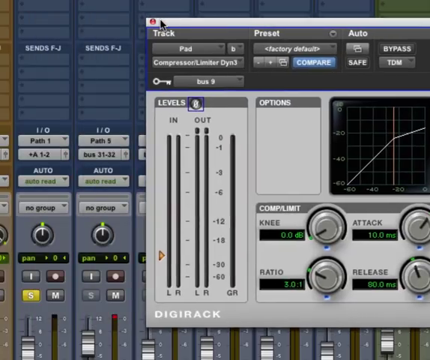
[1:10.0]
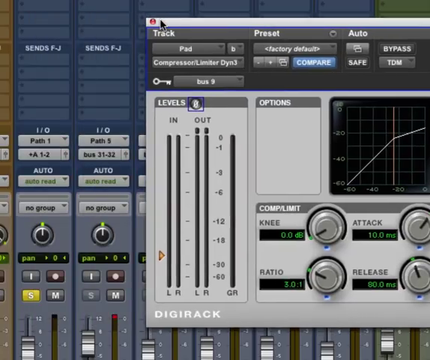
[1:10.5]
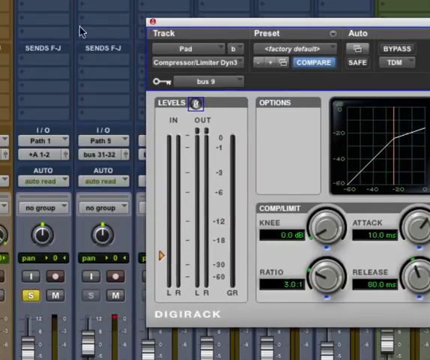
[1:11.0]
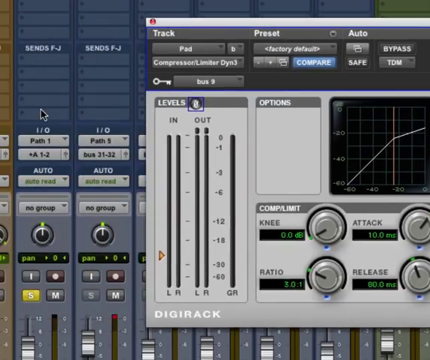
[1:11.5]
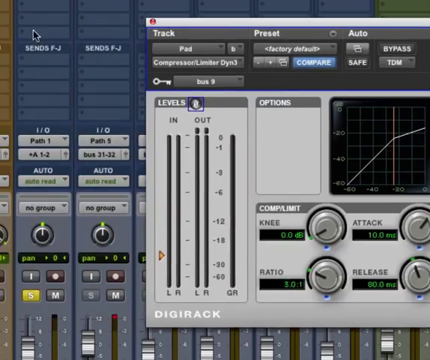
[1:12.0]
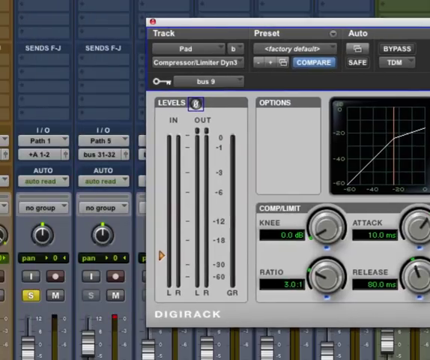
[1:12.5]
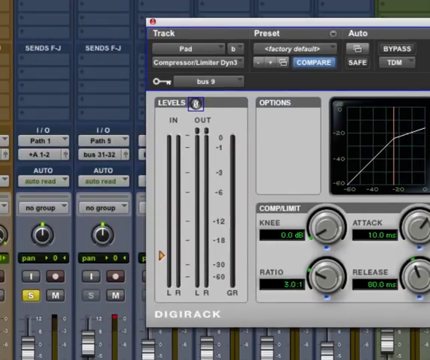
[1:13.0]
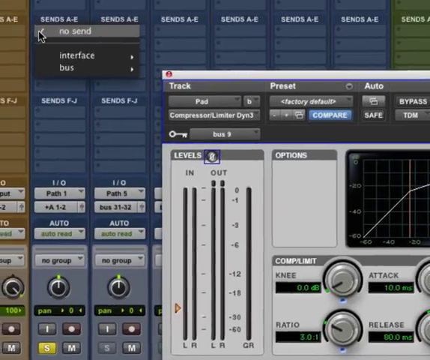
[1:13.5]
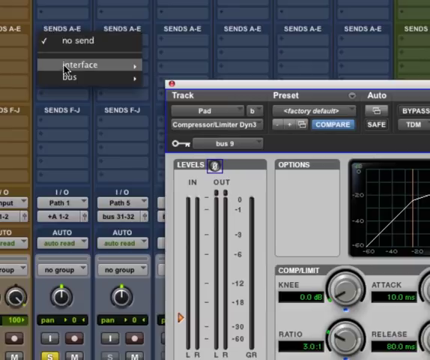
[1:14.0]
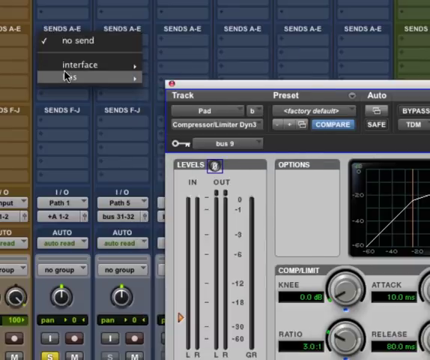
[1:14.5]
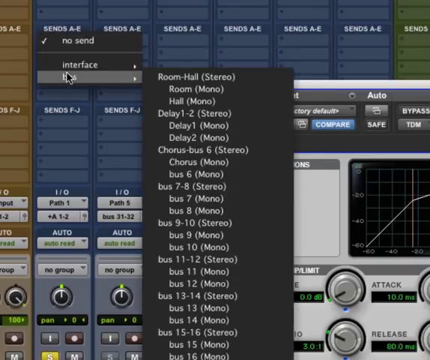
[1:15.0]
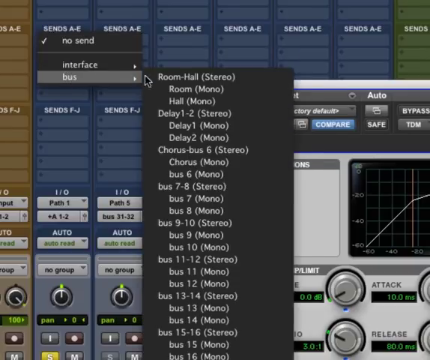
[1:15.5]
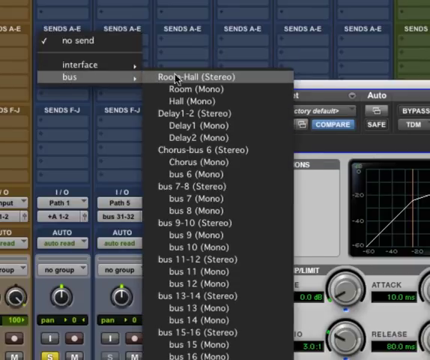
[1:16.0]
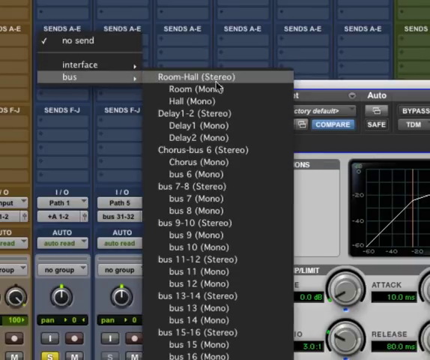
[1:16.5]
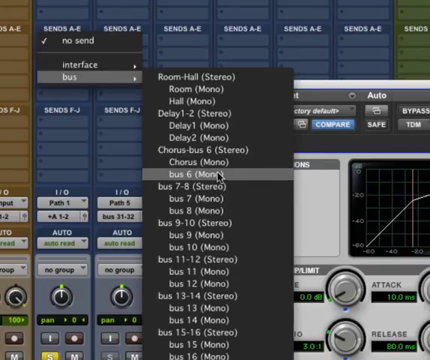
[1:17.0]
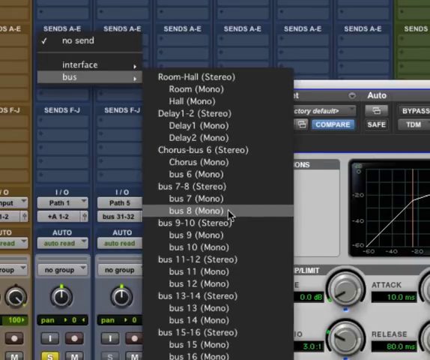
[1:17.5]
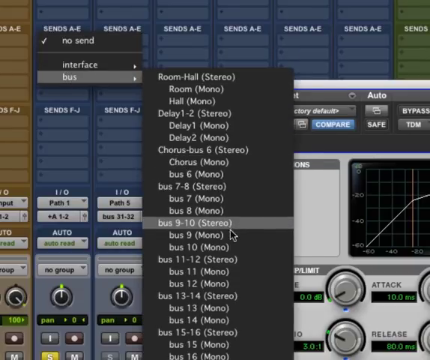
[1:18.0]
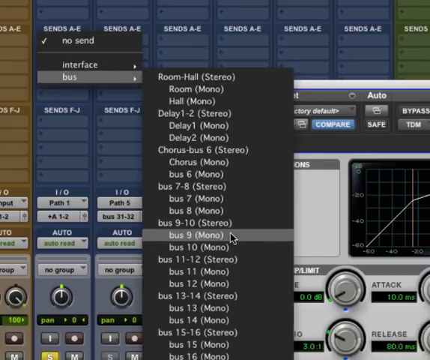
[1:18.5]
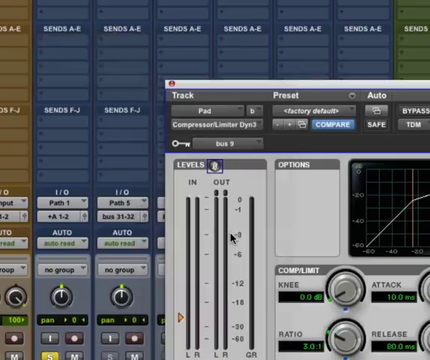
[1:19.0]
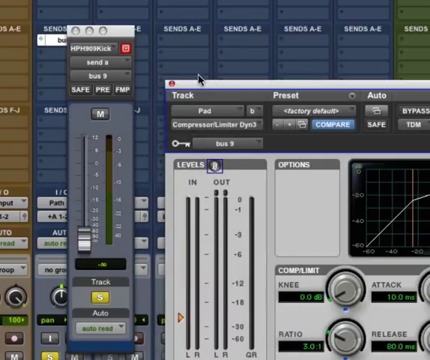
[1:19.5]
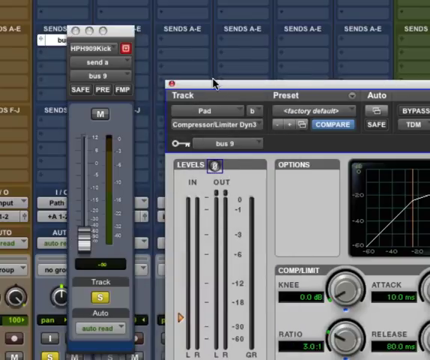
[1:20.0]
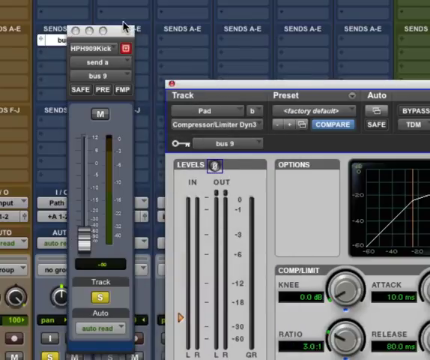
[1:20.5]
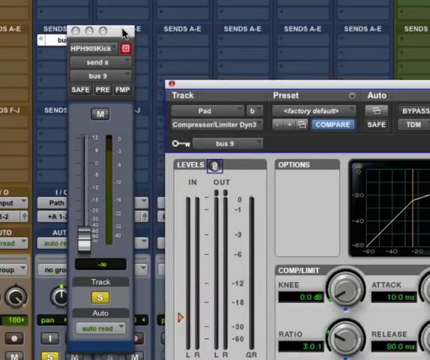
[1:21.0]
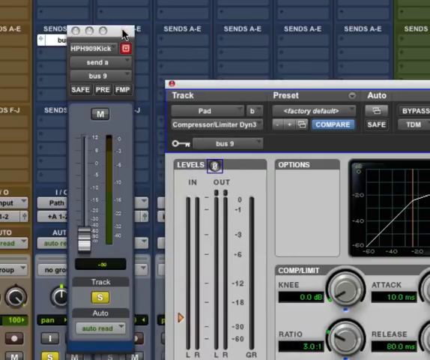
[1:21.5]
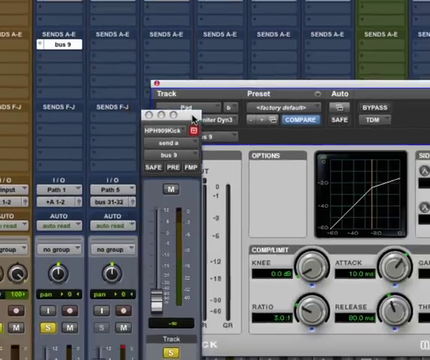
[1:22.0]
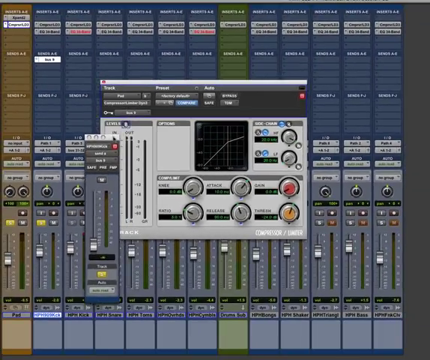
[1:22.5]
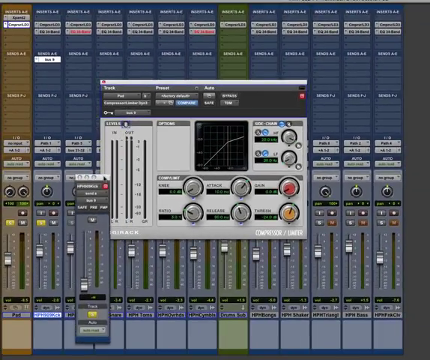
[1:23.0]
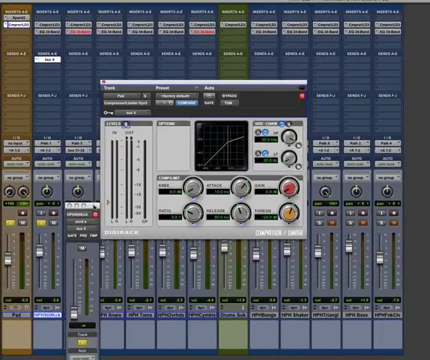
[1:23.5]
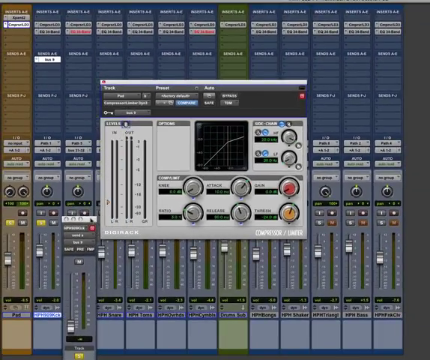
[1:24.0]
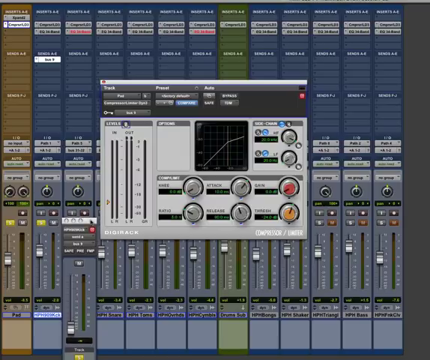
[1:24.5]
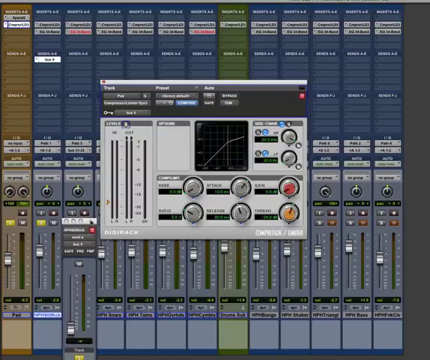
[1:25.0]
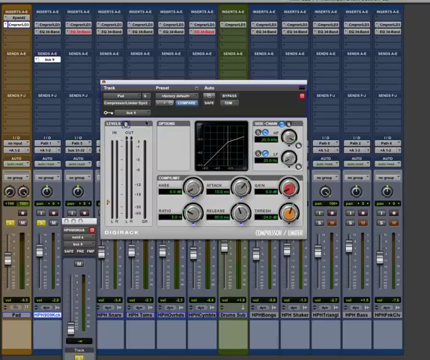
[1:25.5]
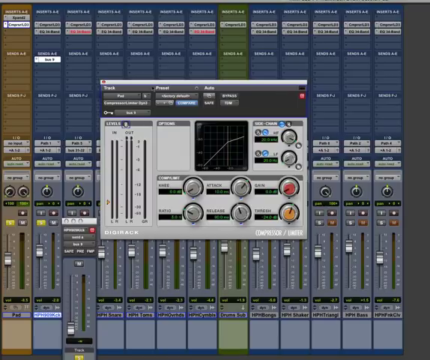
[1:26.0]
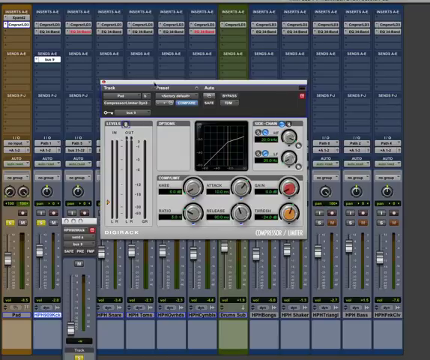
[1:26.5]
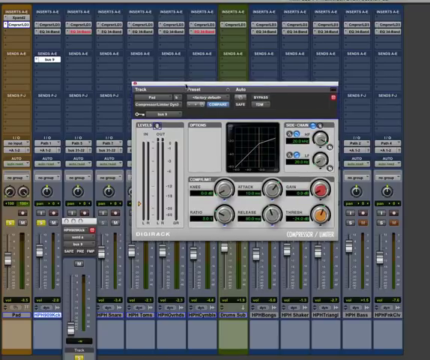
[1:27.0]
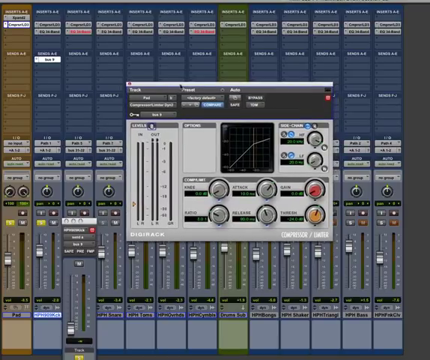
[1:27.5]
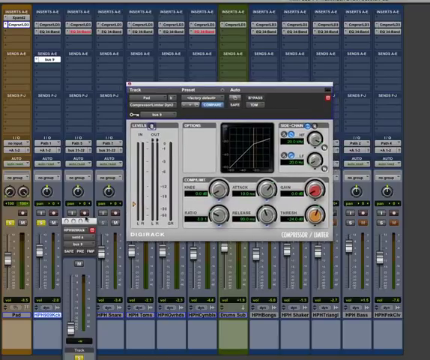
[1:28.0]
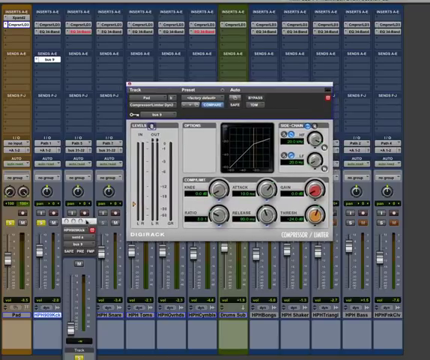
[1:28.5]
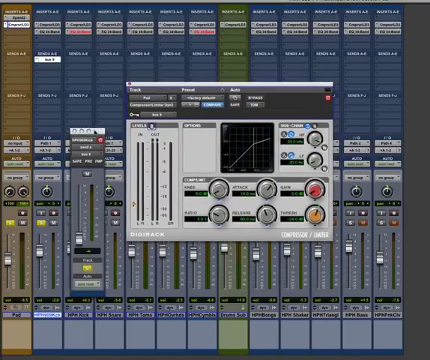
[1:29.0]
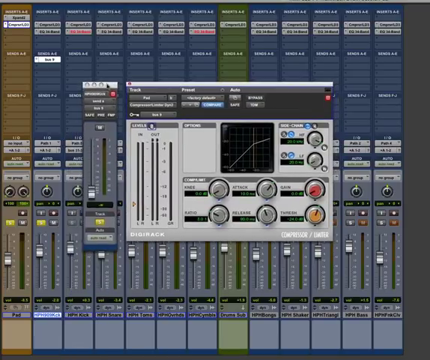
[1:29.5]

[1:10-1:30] The side chain compression title is on screen. There are three little buttons inside the line, two gray and one black, with two little round things above them. There are lots of gray buttons and lots of buttons written in blue. His mouse moves around the screen and clicks on things, and a yellow box with black font appears. When he clicks, the fluorescent green light fluctuates up and down. One light is green, one is gray, and one is brown, with a little bit of red at the top. Text reads "dynamics," "compressor stereo," "compressor bank CB1," "compressor bank CB2," "compressor bank CB3," "compressor bank CB4," "compressor and limiter DIN," and "de-esser." Gray letters next to it read "path 3," "path 6," and "plus A1 minus 2" twice. Then "auto," "auto read," and "no group" appear in black words on a gray button on a blue platform.